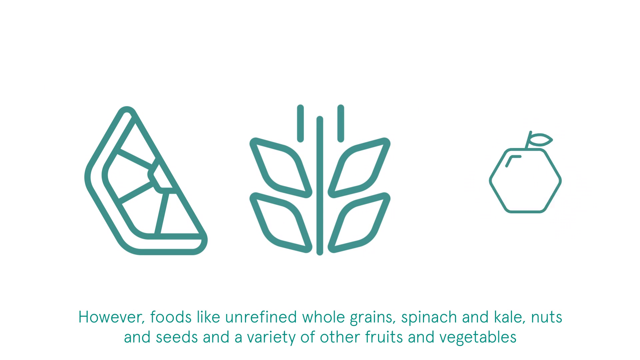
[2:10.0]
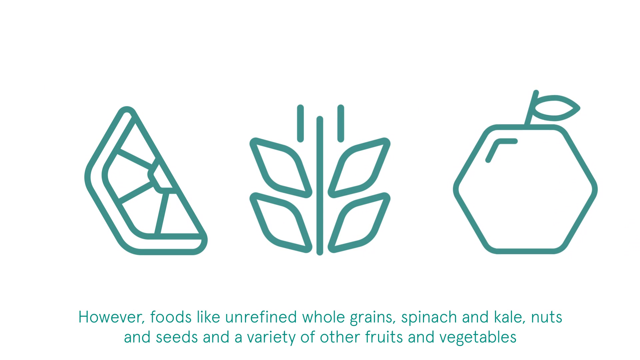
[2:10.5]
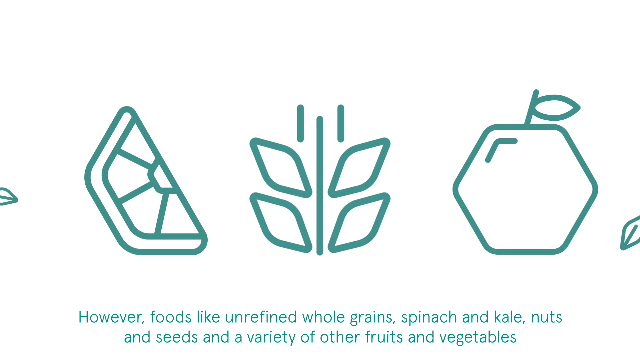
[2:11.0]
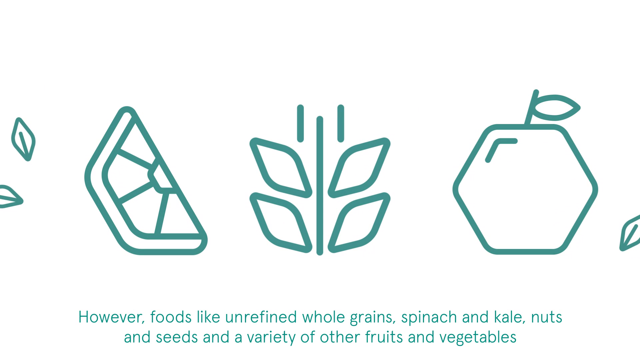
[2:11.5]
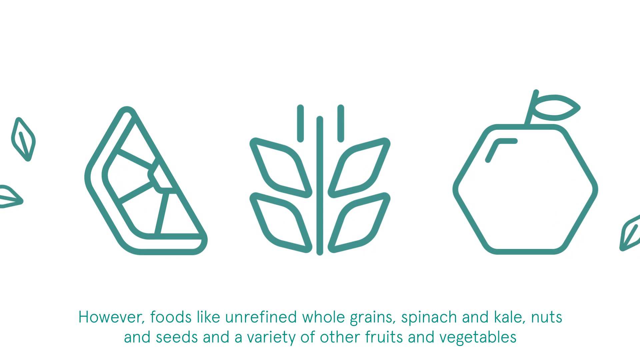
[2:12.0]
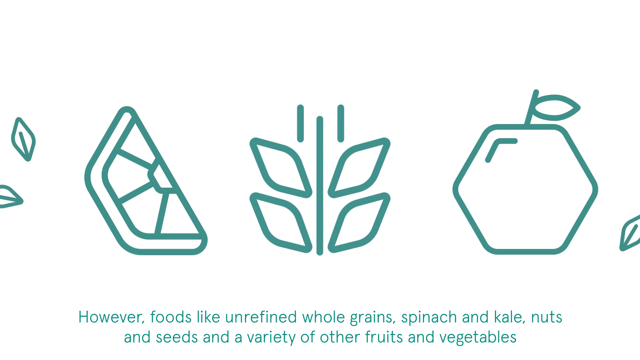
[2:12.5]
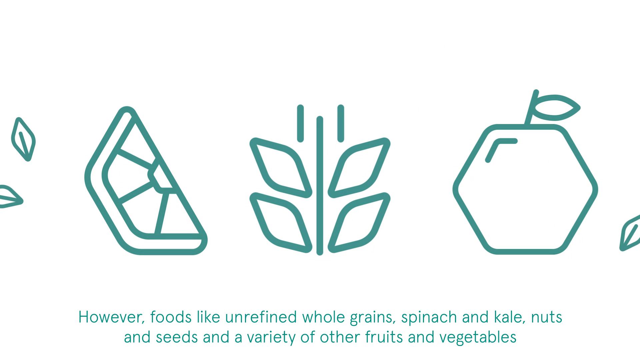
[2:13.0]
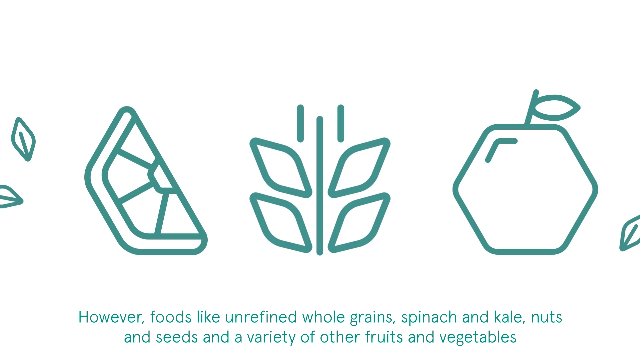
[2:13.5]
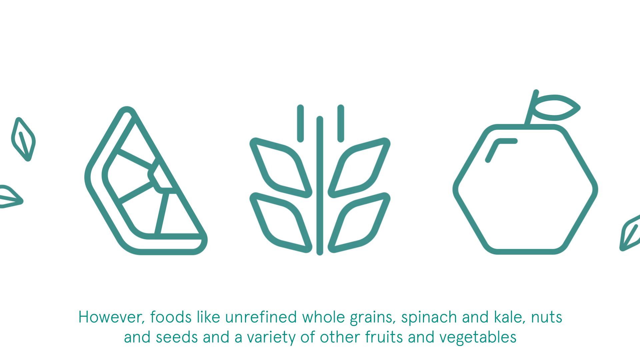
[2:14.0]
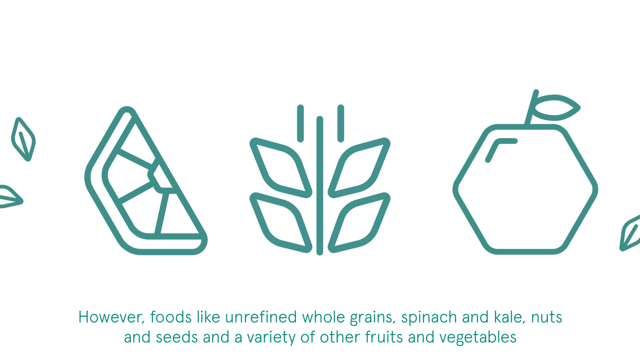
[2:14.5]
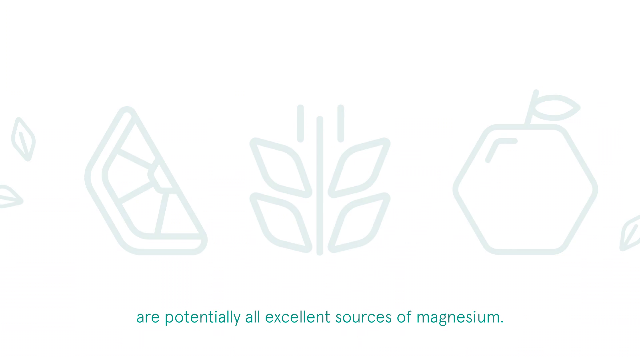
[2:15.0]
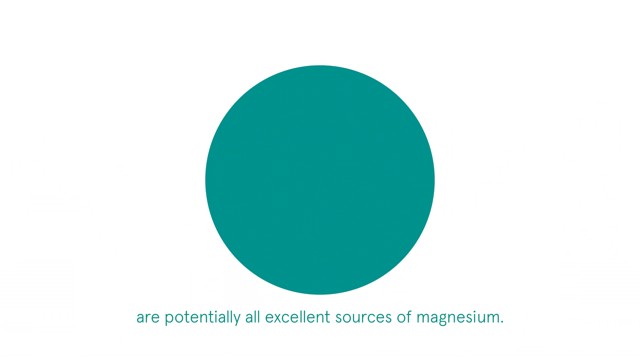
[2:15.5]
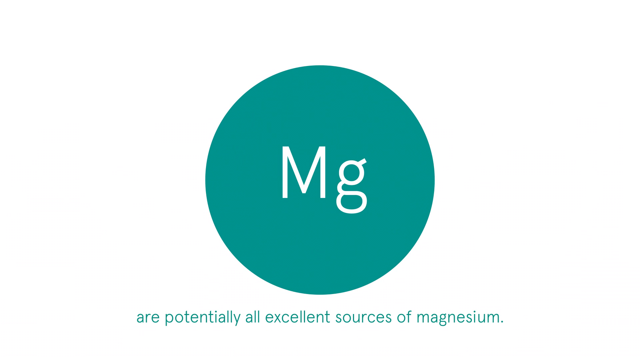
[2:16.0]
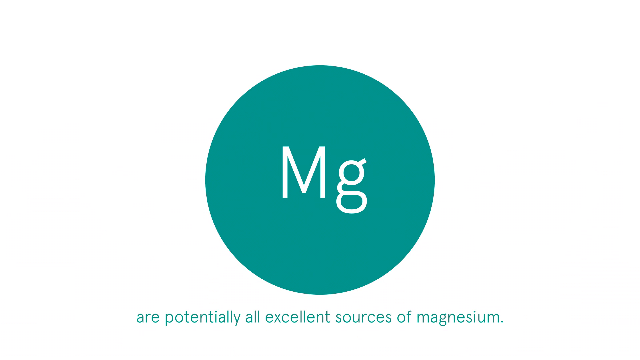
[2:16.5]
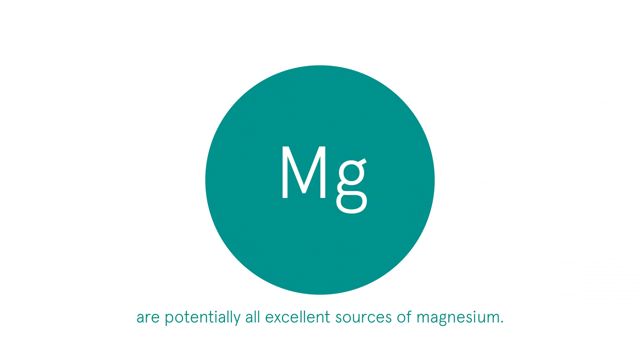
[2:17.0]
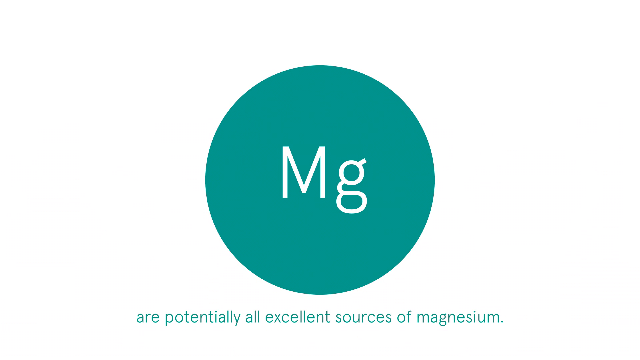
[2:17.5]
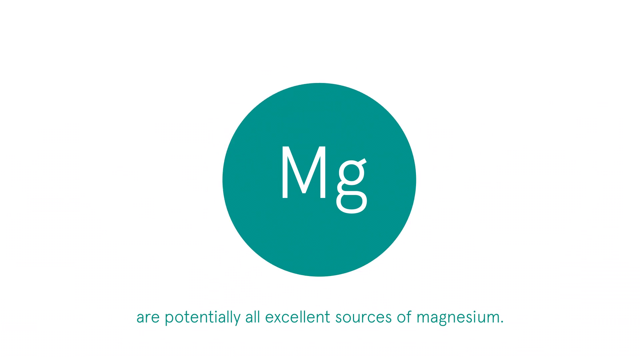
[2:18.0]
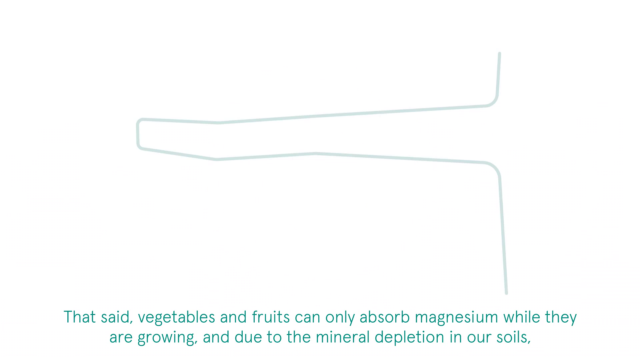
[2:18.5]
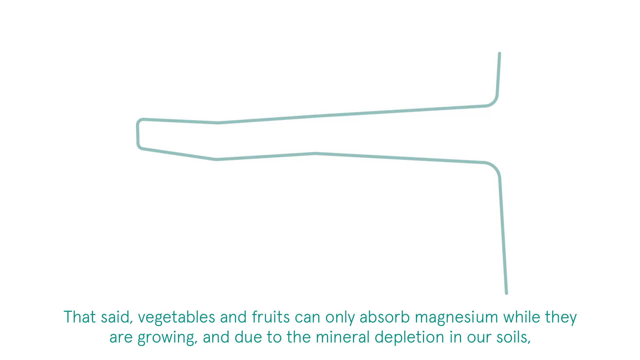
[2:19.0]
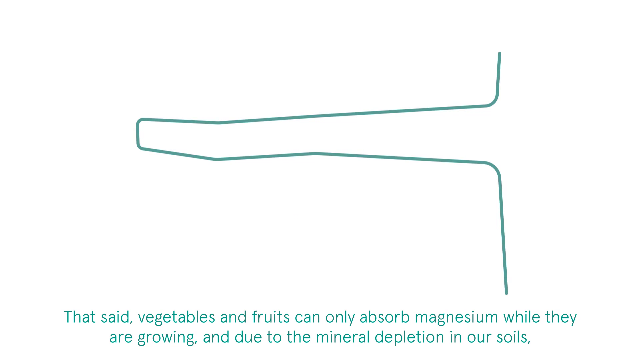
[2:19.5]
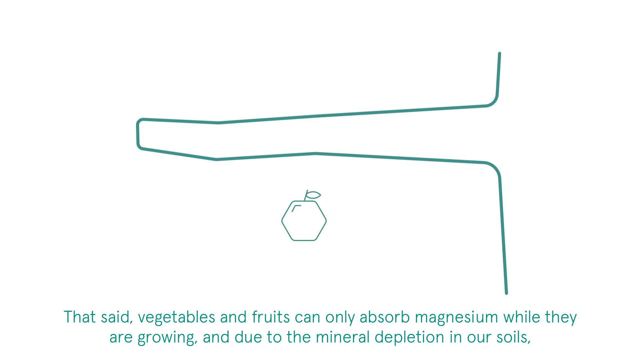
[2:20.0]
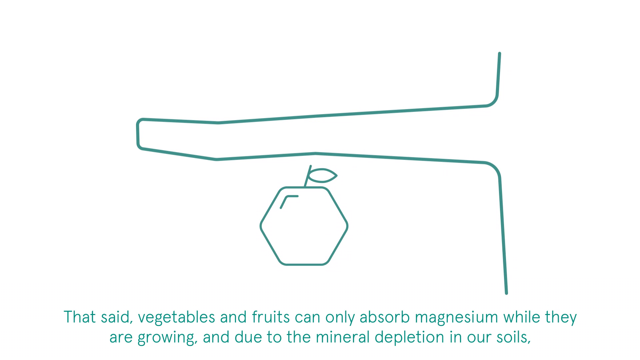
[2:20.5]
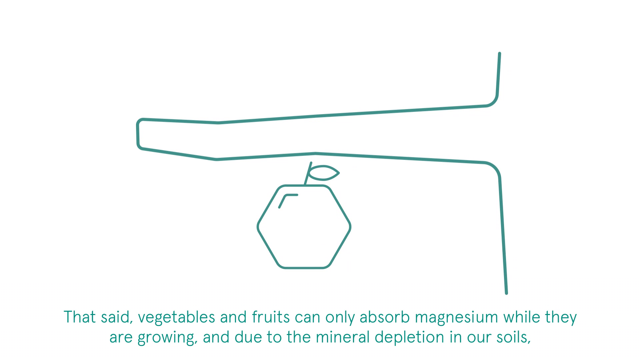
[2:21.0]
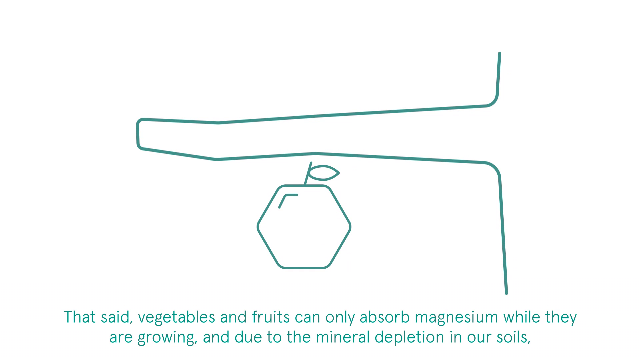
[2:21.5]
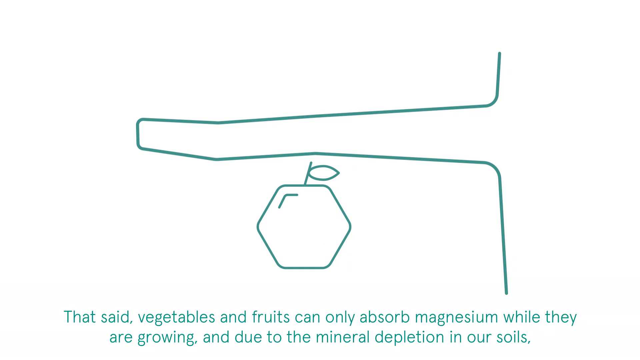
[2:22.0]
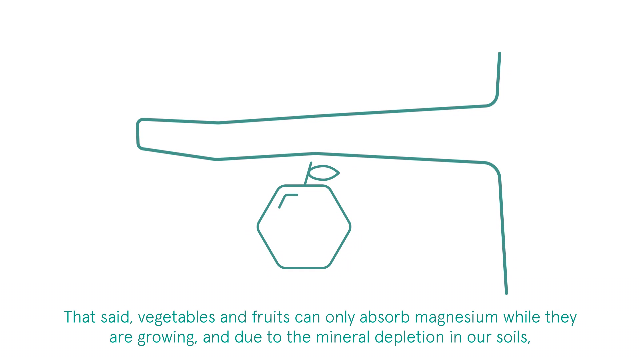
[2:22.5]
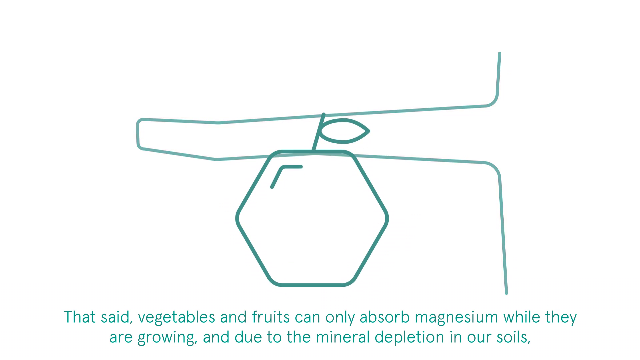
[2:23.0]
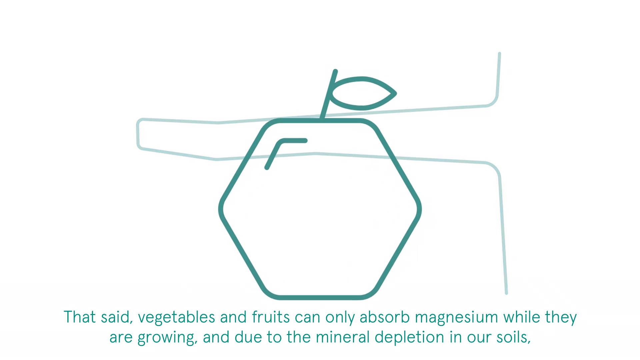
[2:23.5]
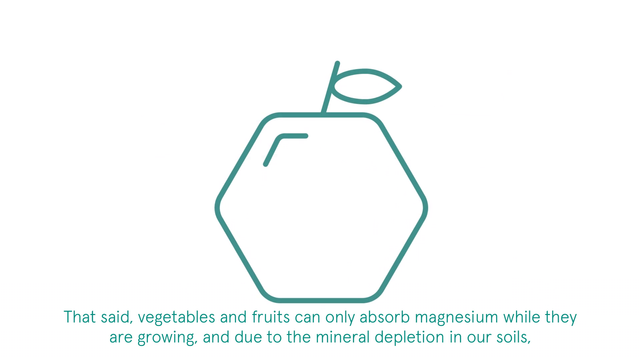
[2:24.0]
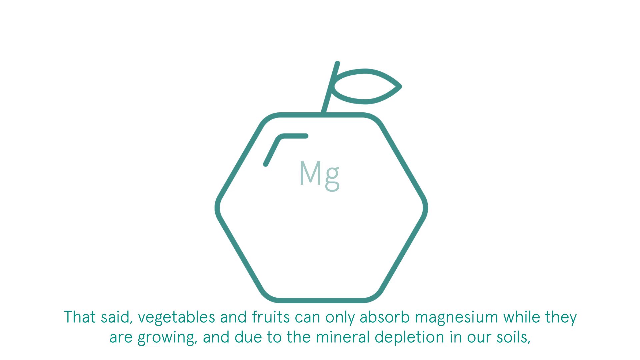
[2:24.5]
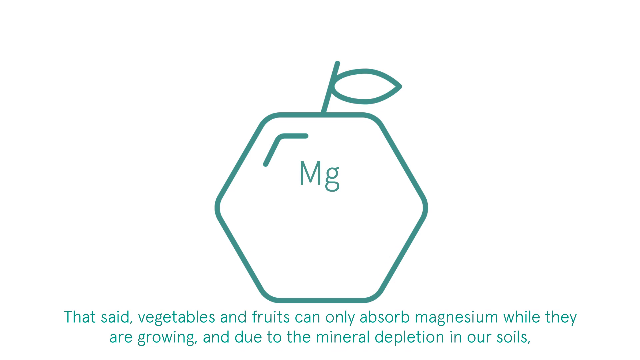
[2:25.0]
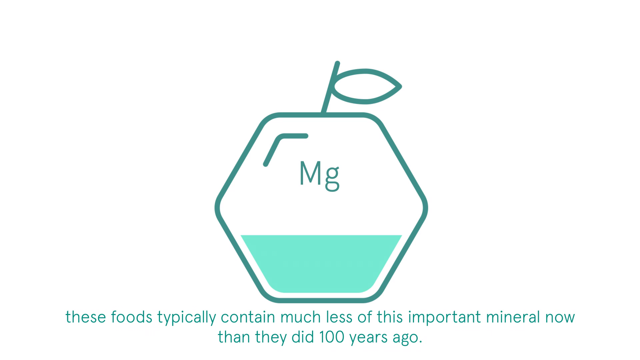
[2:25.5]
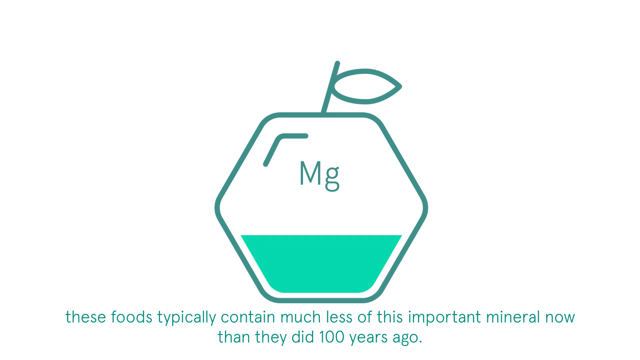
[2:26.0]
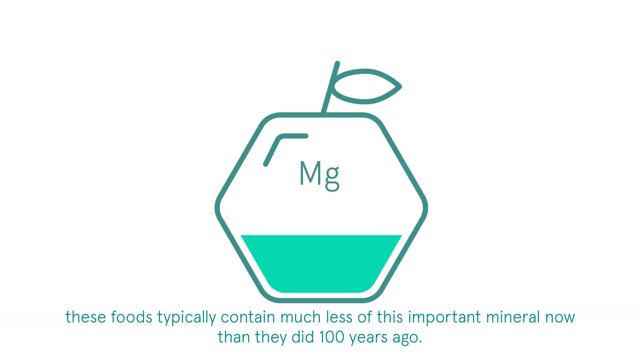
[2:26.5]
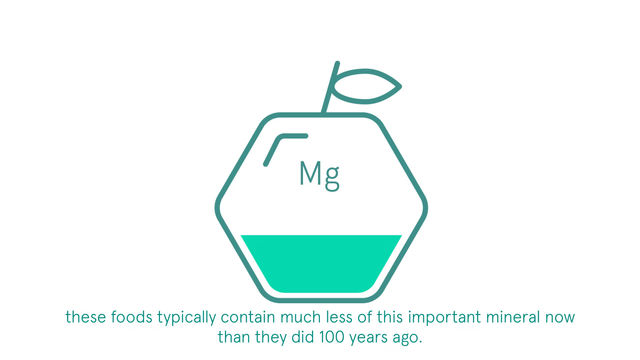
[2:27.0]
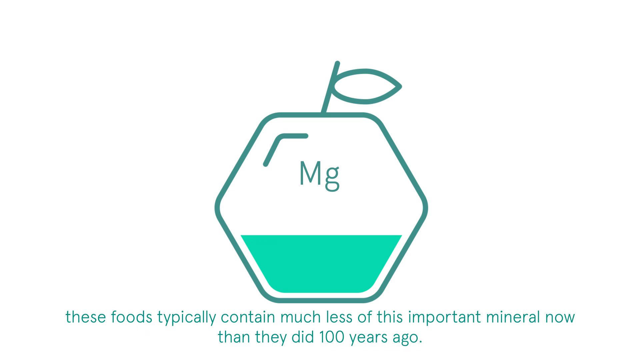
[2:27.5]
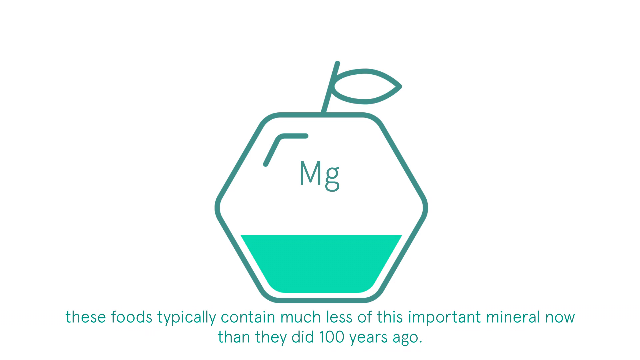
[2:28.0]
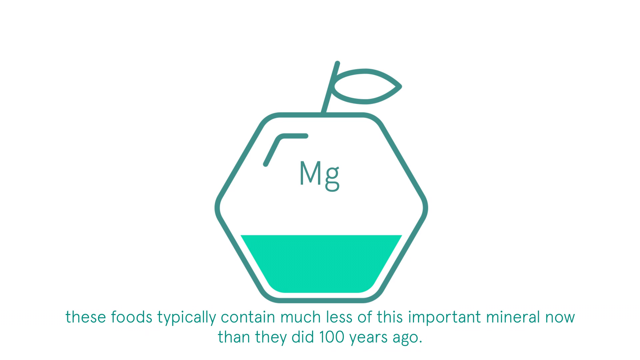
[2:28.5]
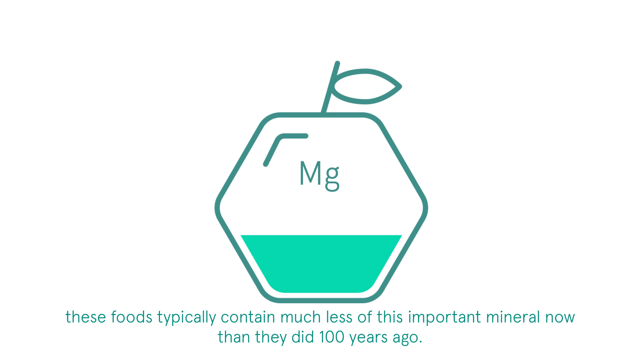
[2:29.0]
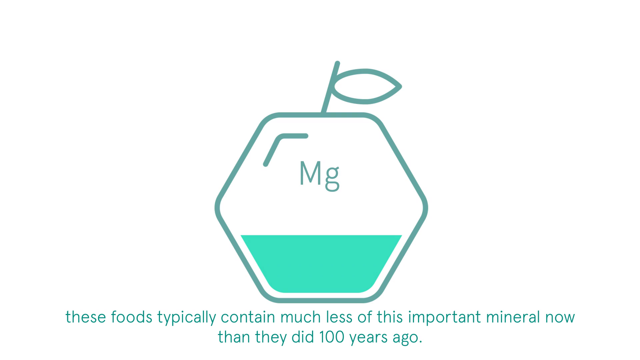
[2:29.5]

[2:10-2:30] The pictures are drawn entirely as teal outlines, like slides. This slide is about diet. On the left is the outline of what looks like a citrus fruit, very diagonal-looking, almost like Minecraft. In the middle is a plant with four leaves and two lines. On the right is a smaller apple shaped as a hexagon, with one leaf and a sort of chevron on the left showing light. Text reads "however, foods like unrefined whole grains, spinach and kale, nuts and seeds and a variety of other fruits and vegetables are potentially an excellent source of magnesium." The last part appears on a new slide with a big teal circle containing a white M. Another slide reads "vegetables and fruits can only absorb magnesium while they are growing and due to the mineral depletion in our soils" and shows an unclear outline picture, either two things and an indentation or one thing with a stem coming out of it.